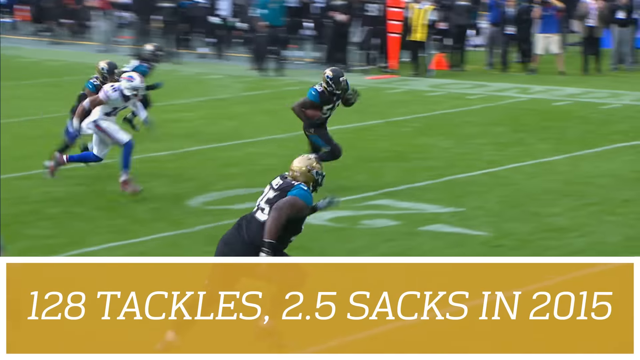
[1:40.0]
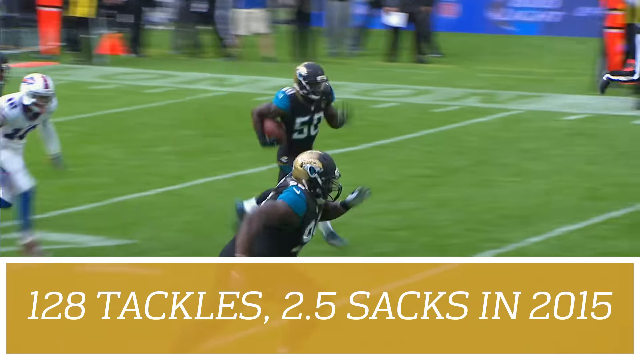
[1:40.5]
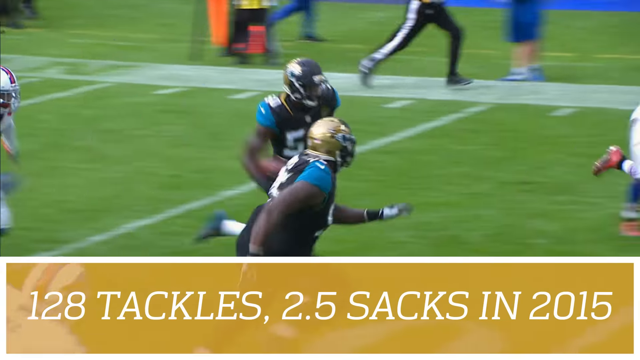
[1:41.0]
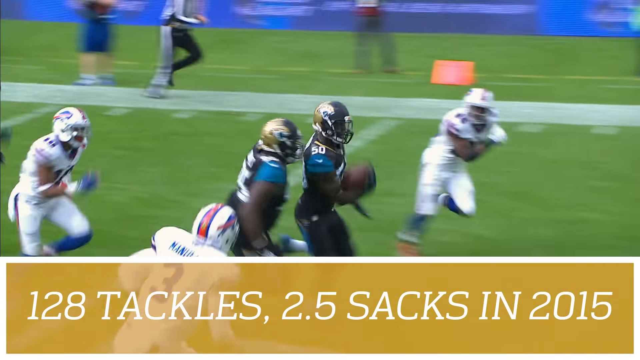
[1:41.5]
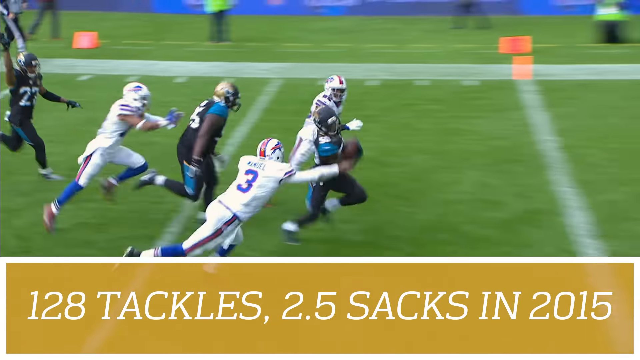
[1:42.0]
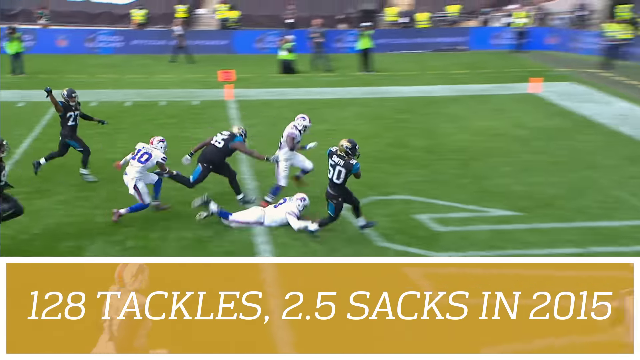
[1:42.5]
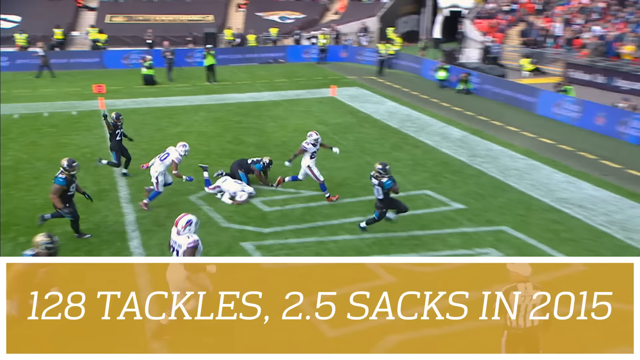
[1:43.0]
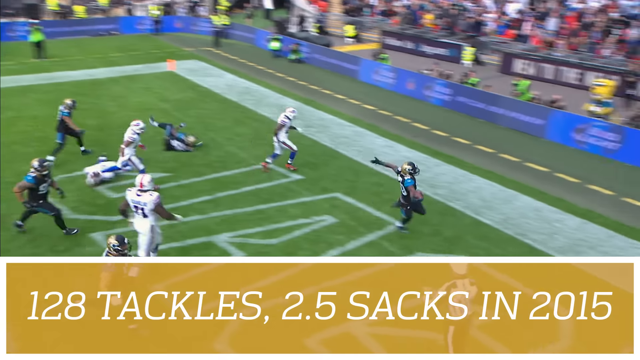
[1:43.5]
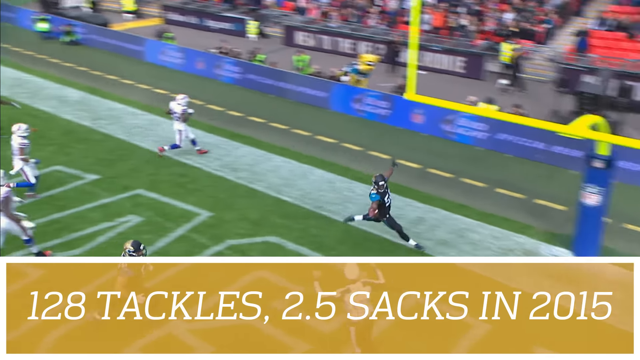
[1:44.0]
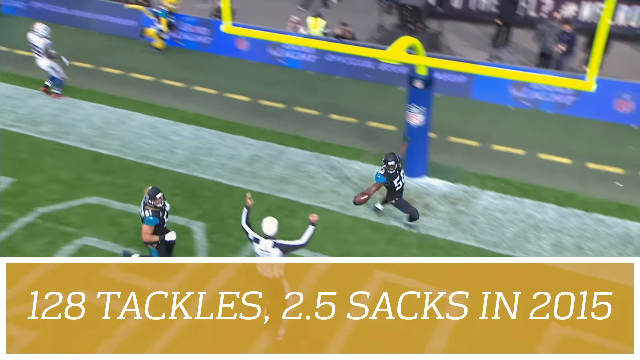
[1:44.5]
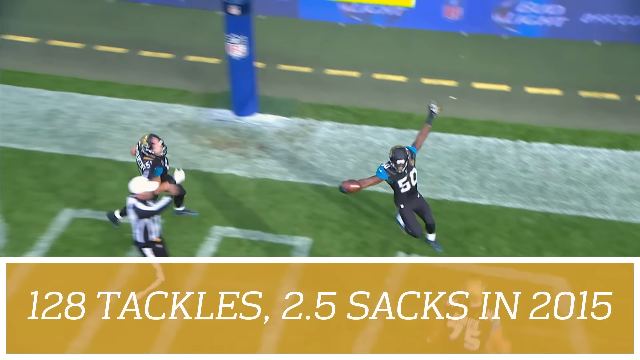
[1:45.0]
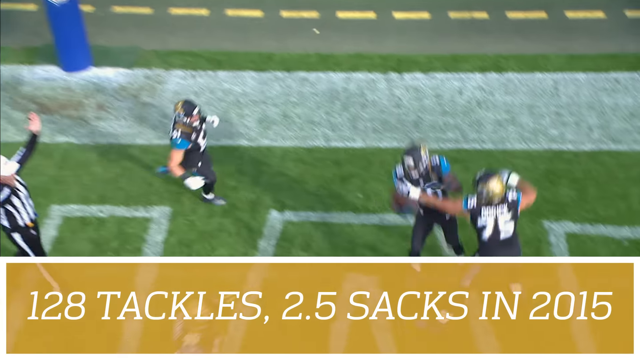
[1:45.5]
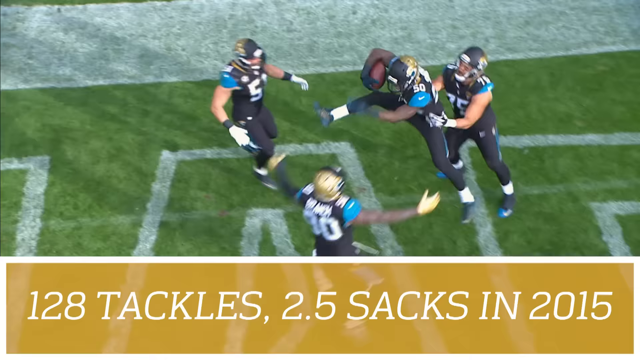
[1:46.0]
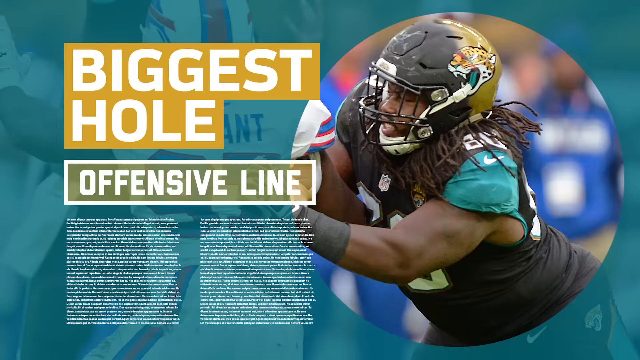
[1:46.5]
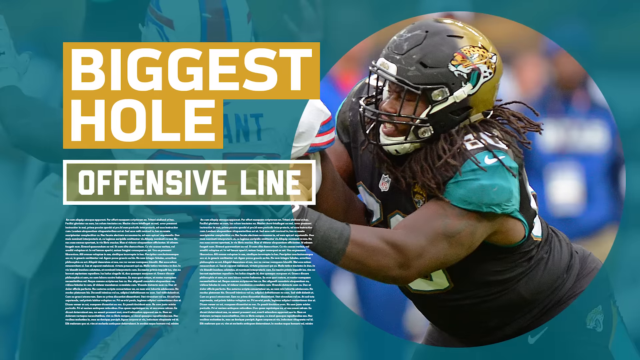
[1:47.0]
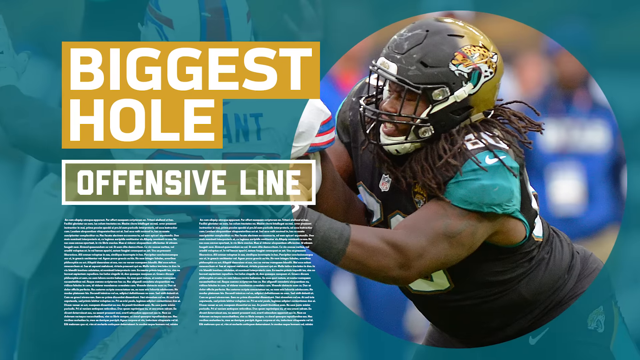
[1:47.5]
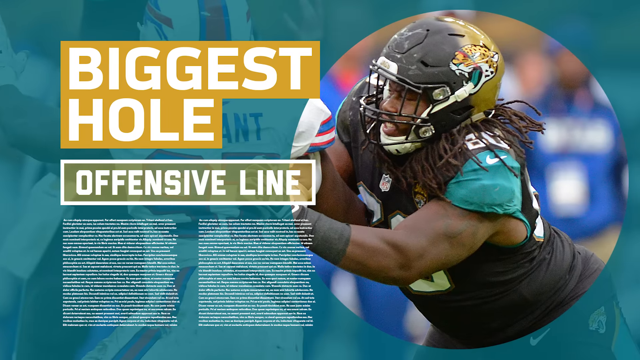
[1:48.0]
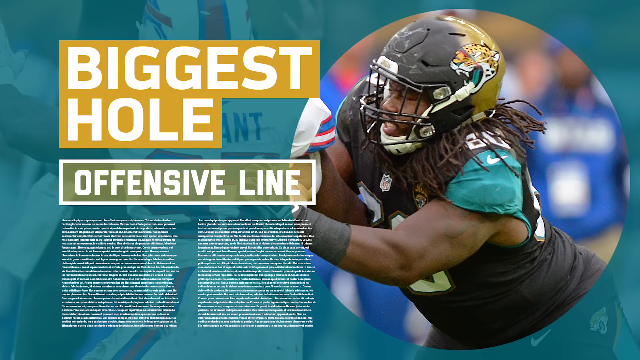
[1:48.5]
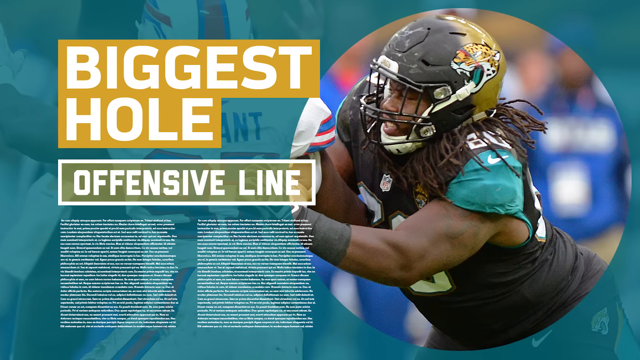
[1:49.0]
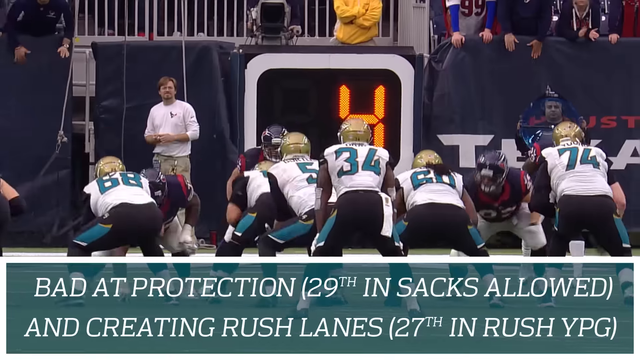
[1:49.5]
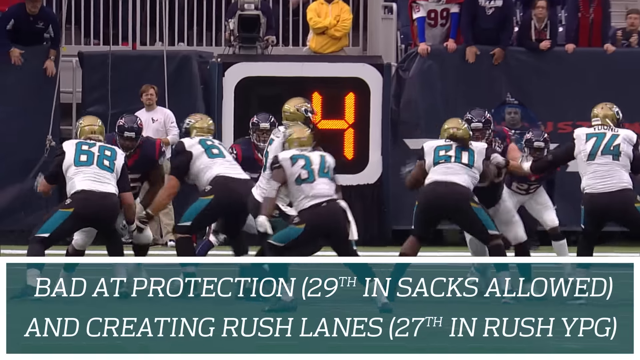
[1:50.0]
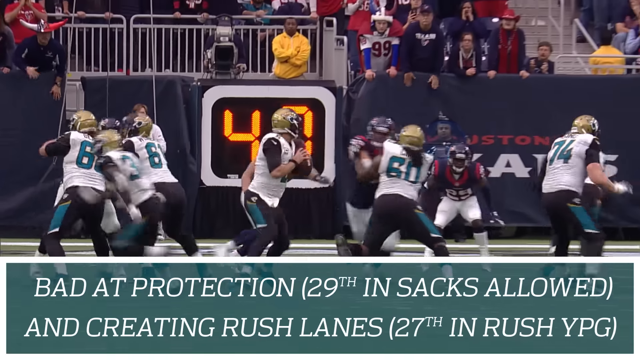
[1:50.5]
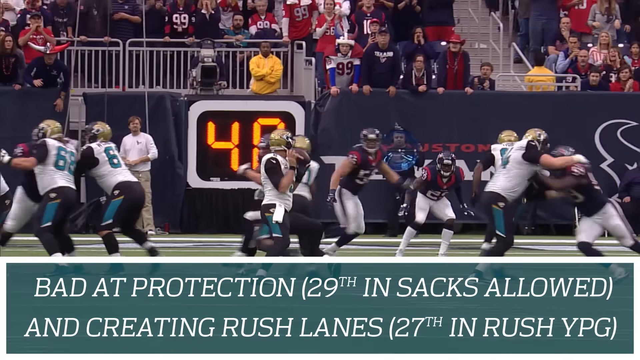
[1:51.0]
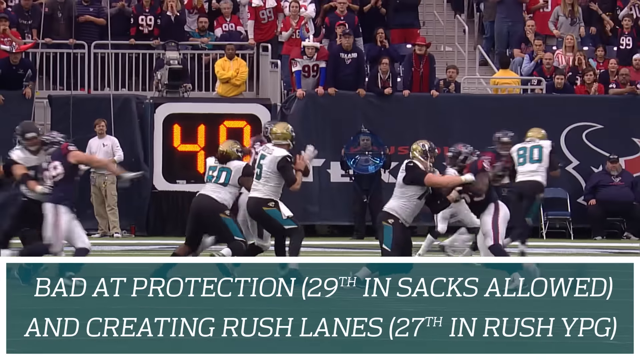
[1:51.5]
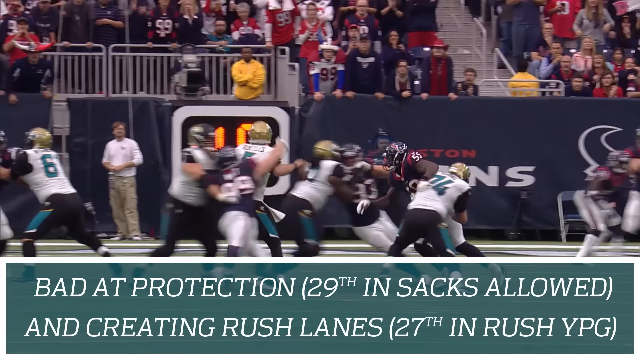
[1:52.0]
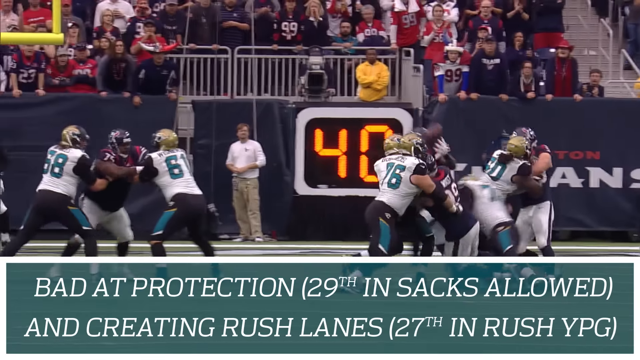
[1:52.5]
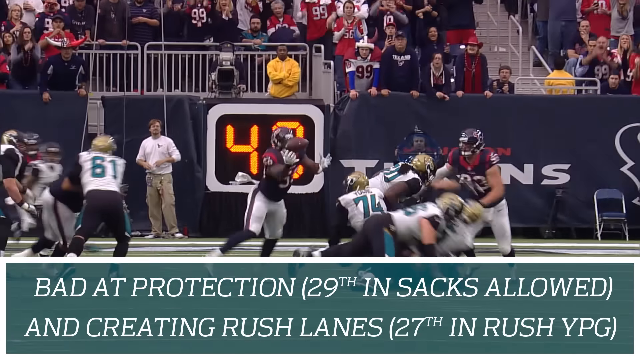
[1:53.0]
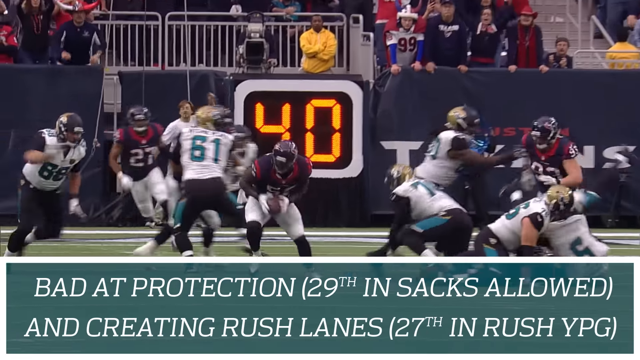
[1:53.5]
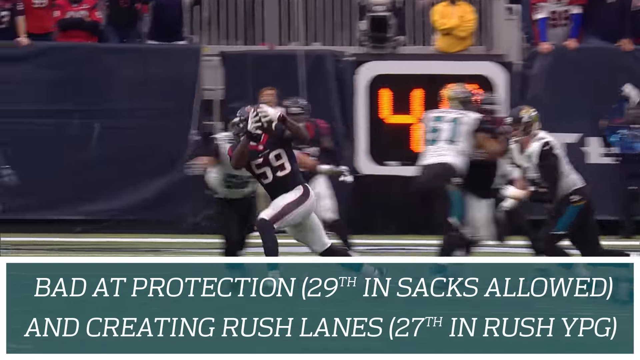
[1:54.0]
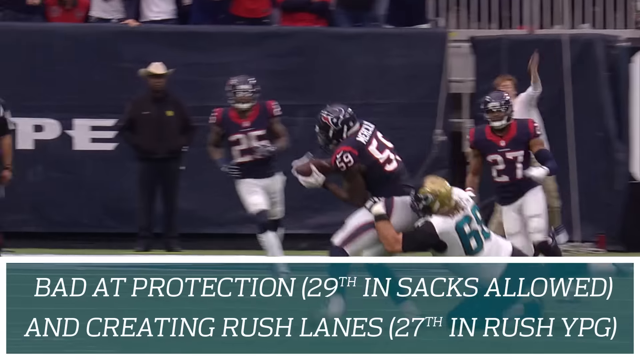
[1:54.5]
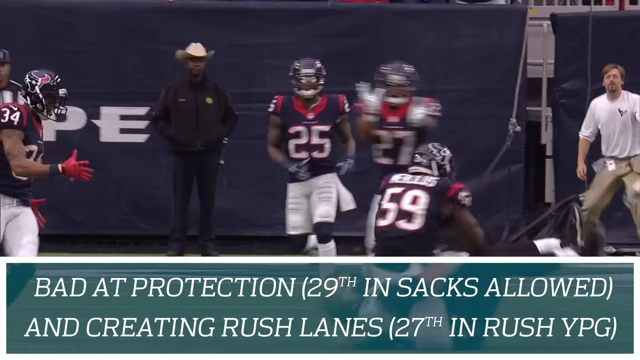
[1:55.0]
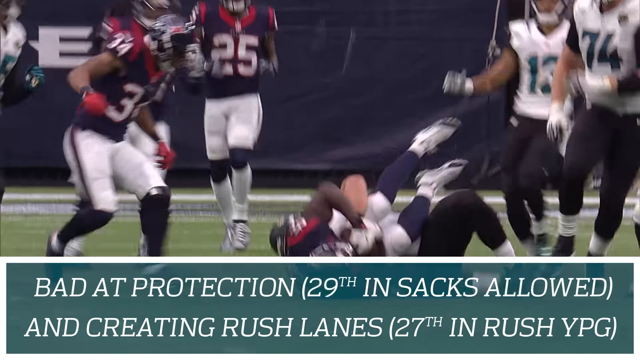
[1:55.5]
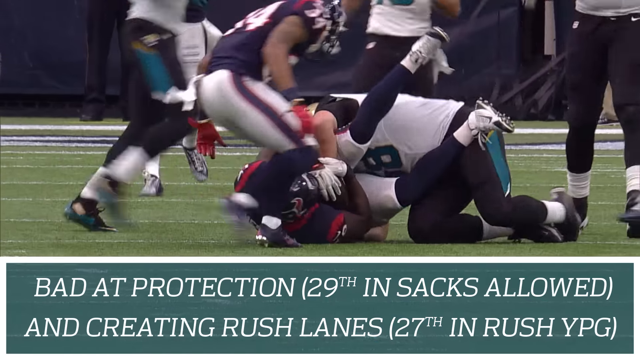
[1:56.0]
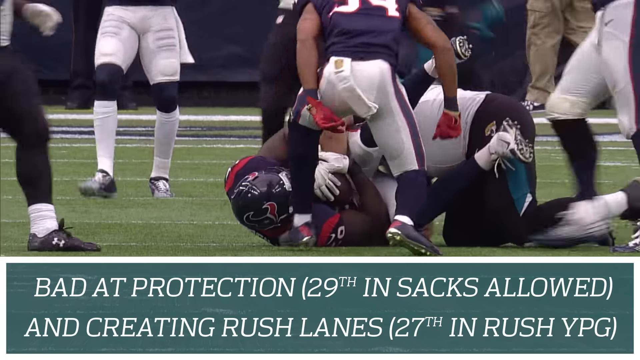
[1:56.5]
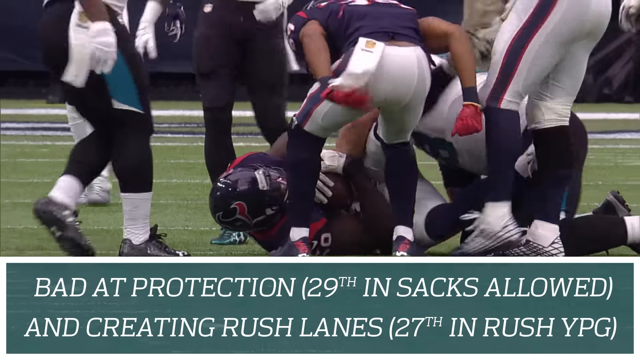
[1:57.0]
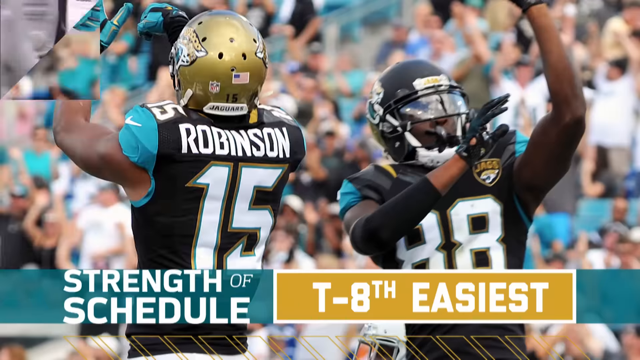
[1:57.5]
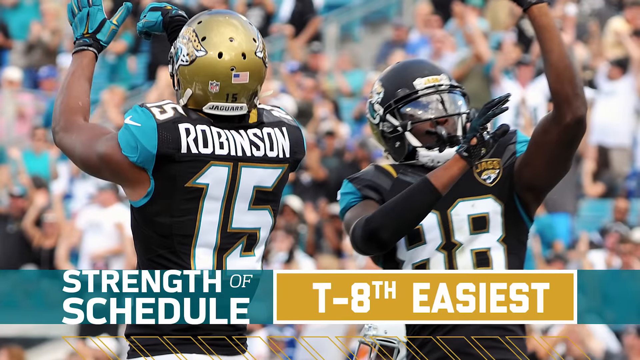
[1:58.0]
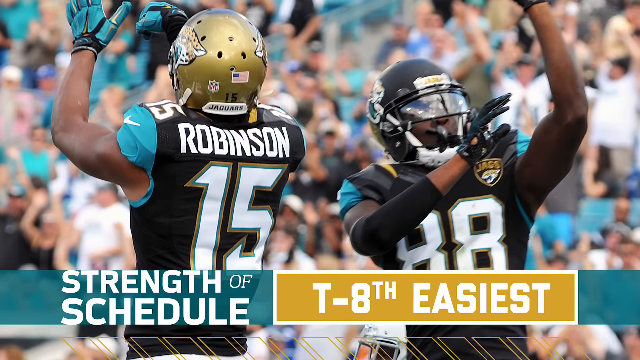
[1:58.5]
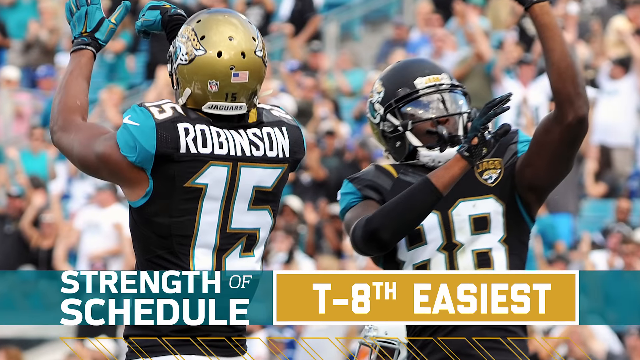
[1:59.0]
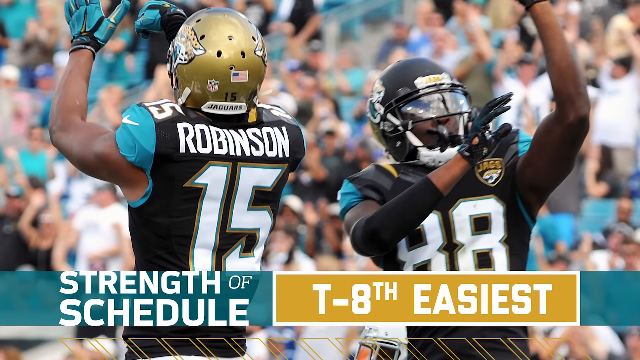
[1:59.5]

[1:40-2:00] The Jaguars defender runs into the other team's end zone and scores the pick six, holding his hands outward. The referee makes the touchdown signal with his hands, and the excited player, number 50, celebrates with his teammates. The scene changes to a Jacksonville Jaguars offensive lineman on the right side, with the text "biggest hole offensive line" on the right. In a game between the Jacksonville Jaguars and the Houston Texans, the Jaguars quarterback drops back and is sacked and stripped; the ball comes out and a Texans player has it before being tackled to the ground, a turnover. The scene then changes to a still image of two Jacksonville Jaguars players, one on the left and one on the right, doing some sort of celebration.